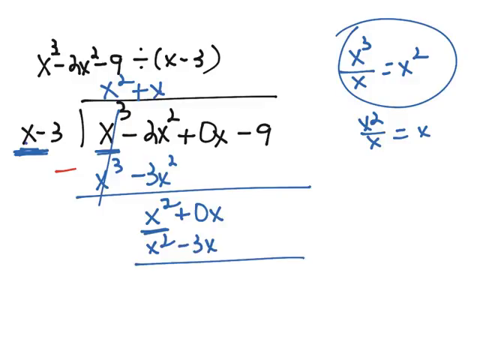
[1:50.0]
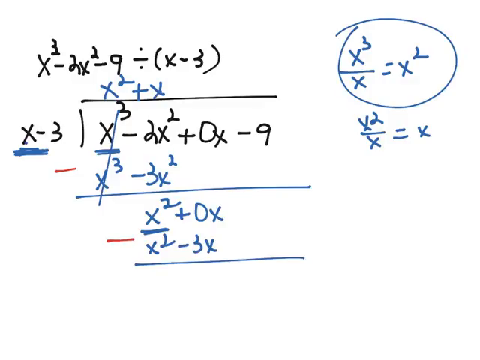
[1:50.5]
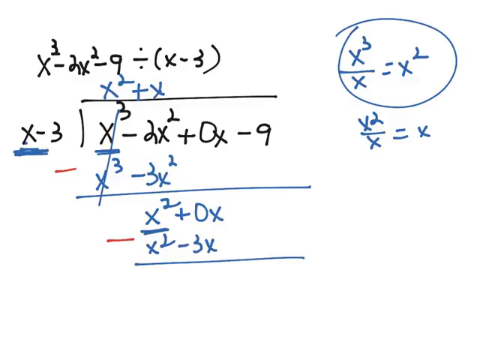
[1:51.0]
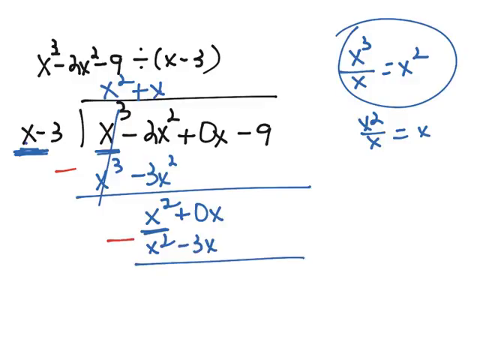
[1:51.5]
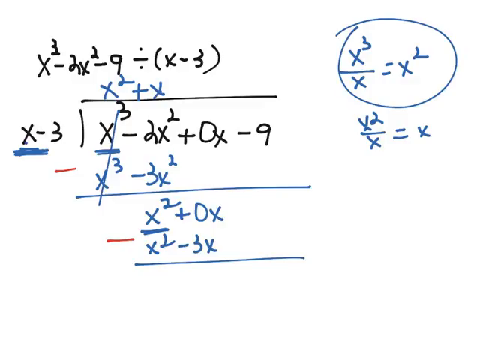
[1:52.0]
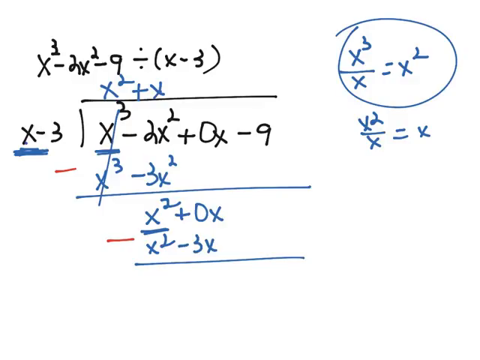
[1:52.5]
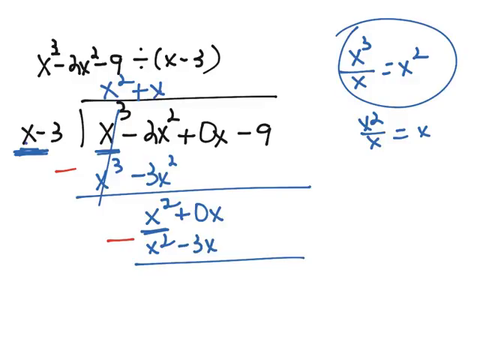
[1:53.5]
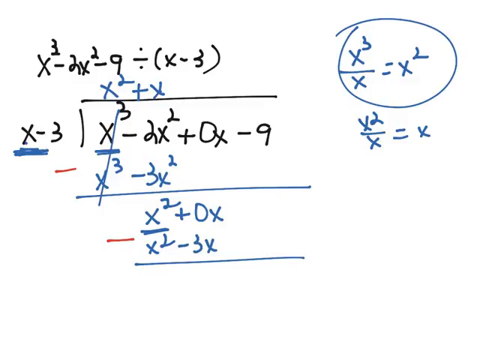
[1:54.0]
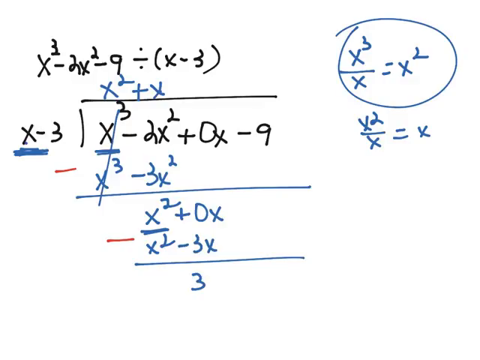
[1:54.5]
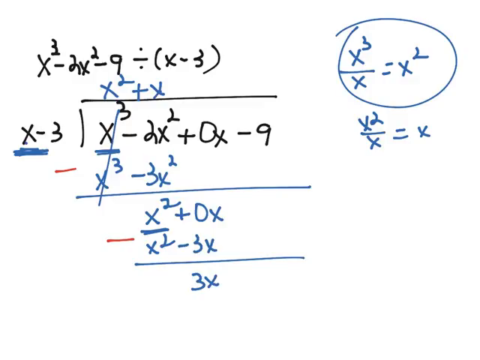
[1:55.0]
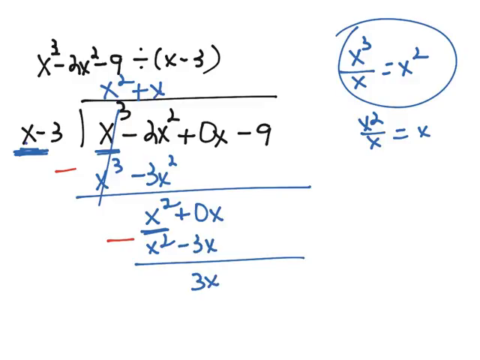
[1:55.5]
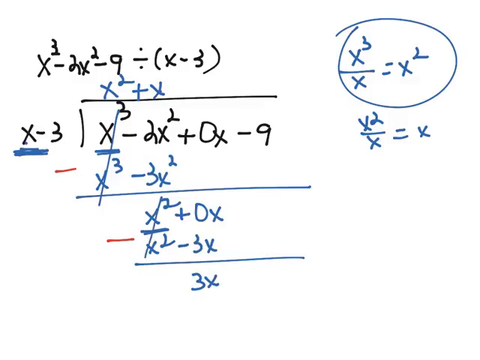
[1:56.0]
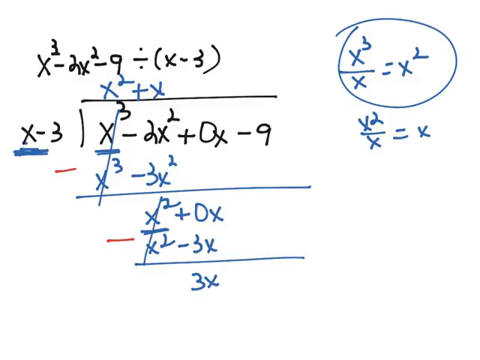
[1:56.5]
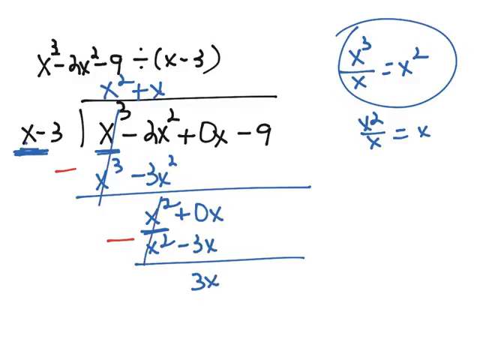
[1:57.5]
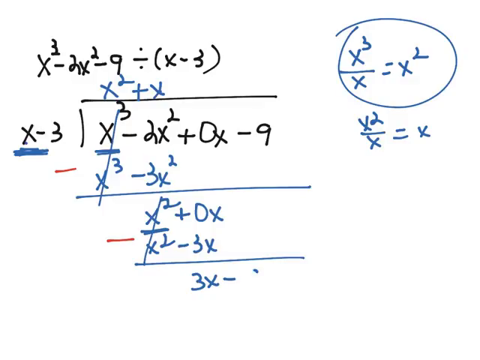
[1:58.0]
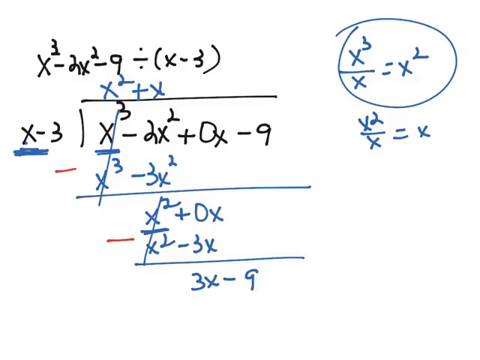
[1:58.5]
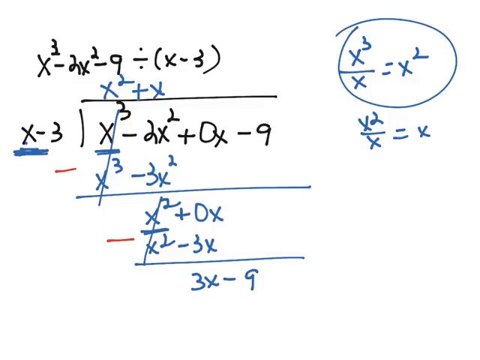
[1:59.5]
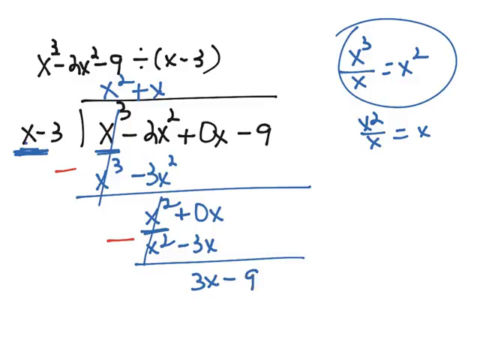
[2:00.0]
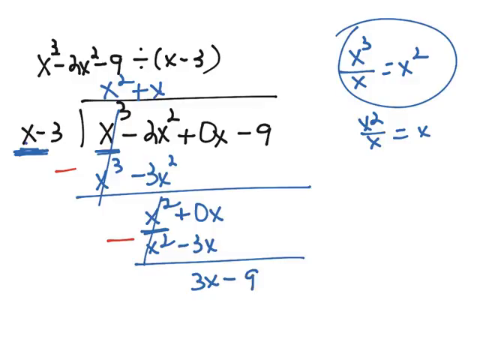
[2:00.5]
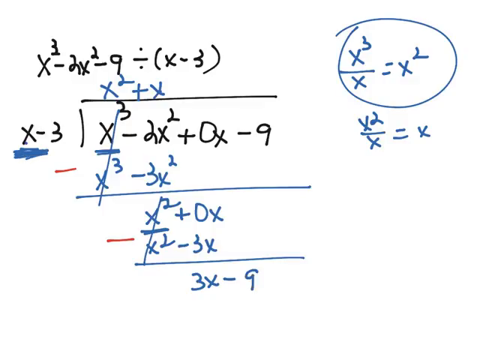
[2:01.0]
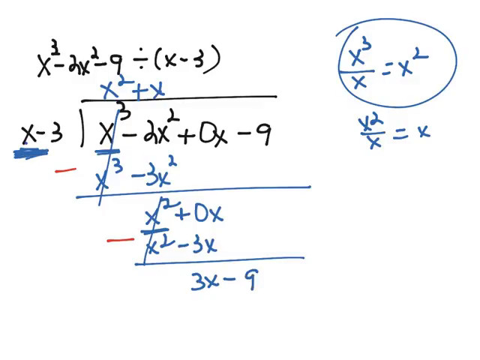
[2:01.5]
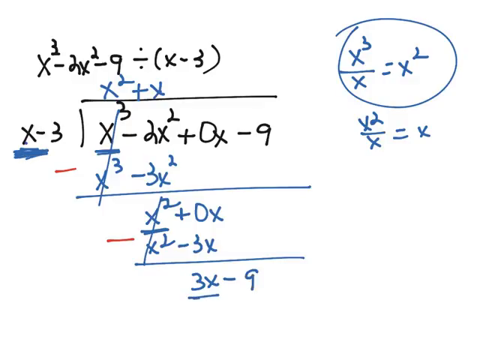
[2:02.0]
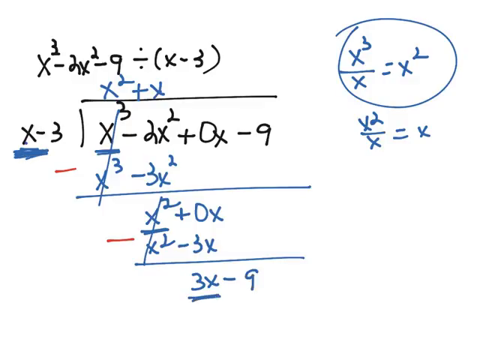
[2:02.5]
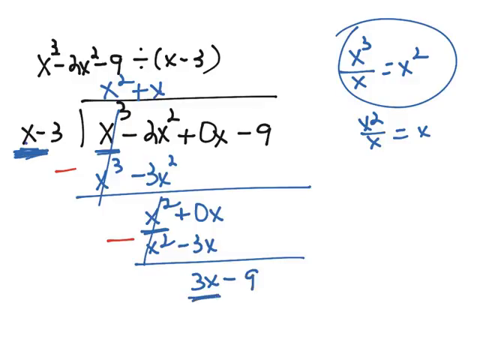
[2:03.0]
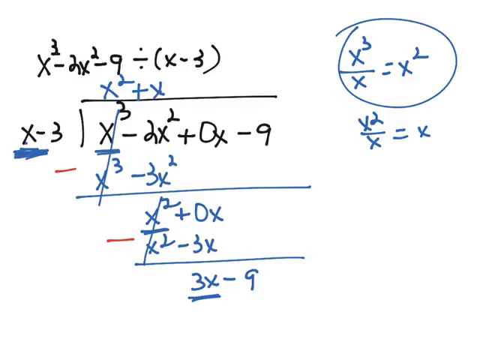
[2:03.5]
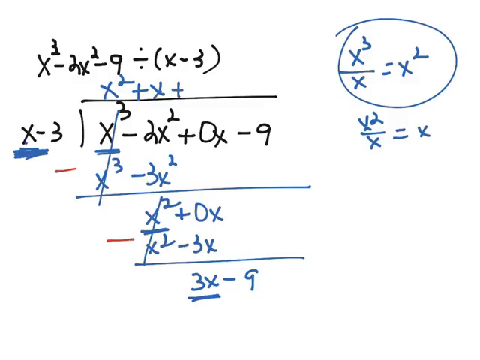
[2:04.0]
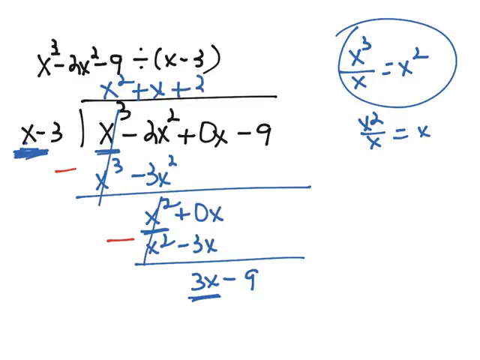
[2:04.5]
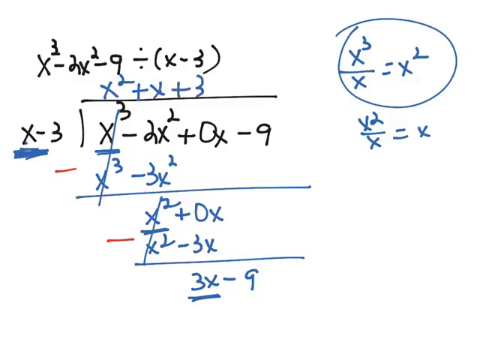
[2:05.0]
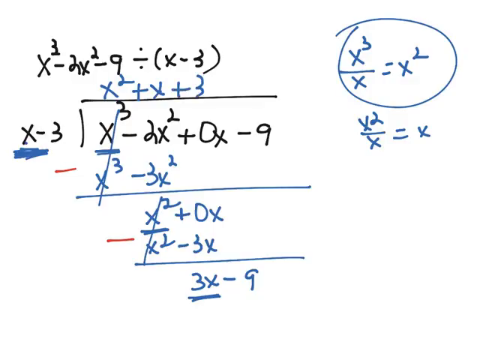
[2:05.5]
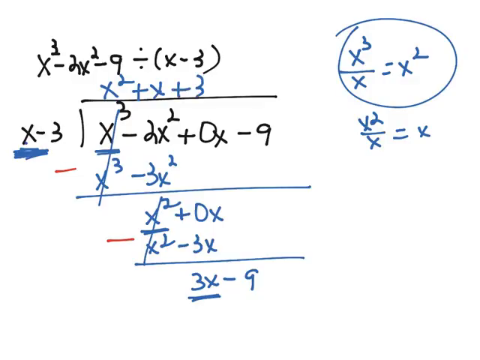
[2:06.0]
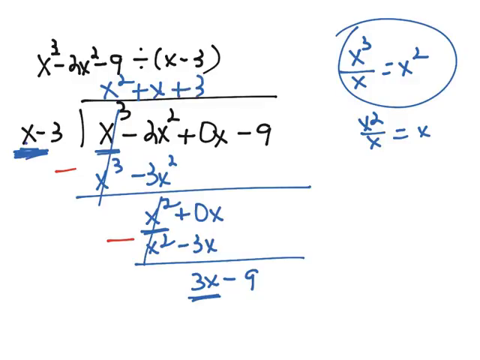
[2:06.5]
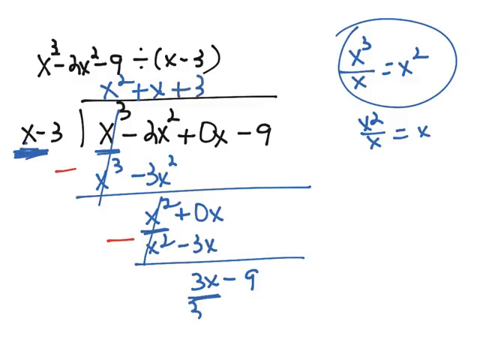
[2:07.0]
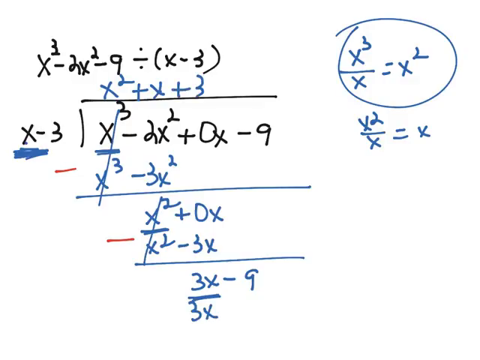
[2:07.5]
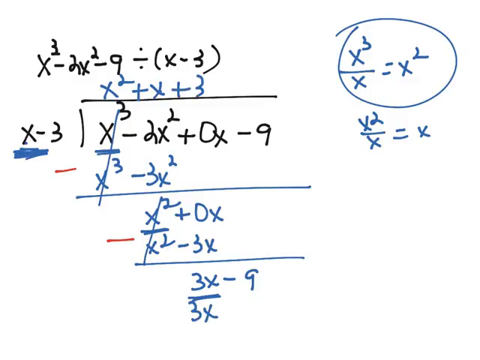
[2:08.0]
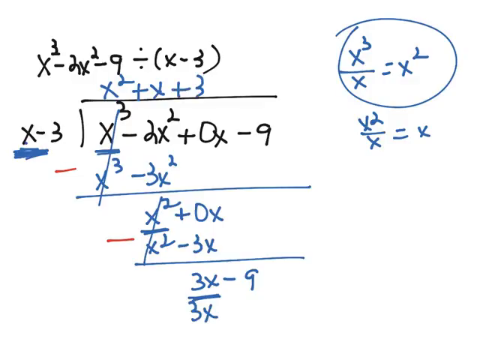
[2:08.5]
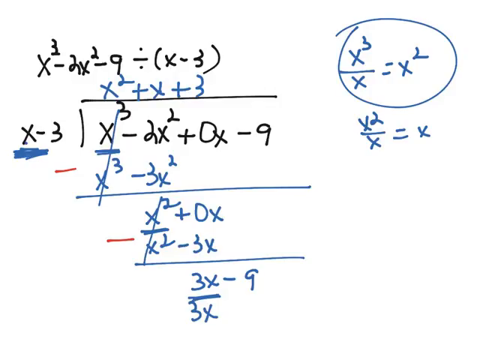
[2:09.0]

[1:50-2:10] The math equation being worked on, x³ − 2x² − 9 divided by (x − 3), remains, with x³ − 2x² + 0x − 9 being divided by x − 3. On top of the division, x² + x has been written so far. Then x² − 3x is shown being divided by 3x − 9. At the top of the division, x² + x + 3 is now written in blue. On the right of the screen, x³ ÷ x = x² is still there, all written in blue and circled in blue, and below the circle, x² ÷ x = x is also written in blue.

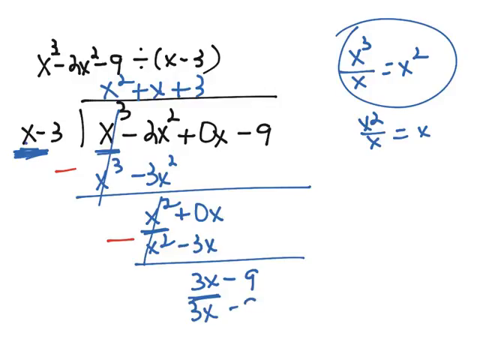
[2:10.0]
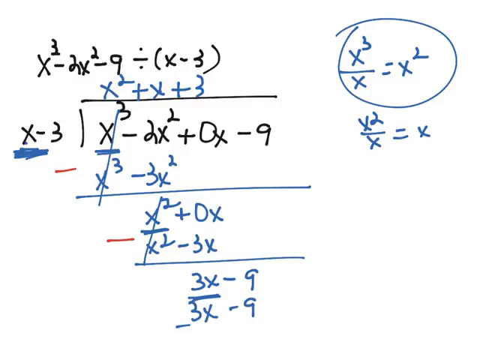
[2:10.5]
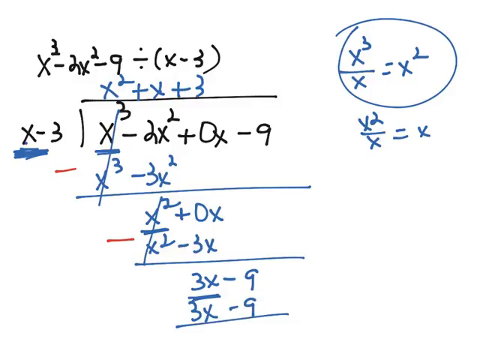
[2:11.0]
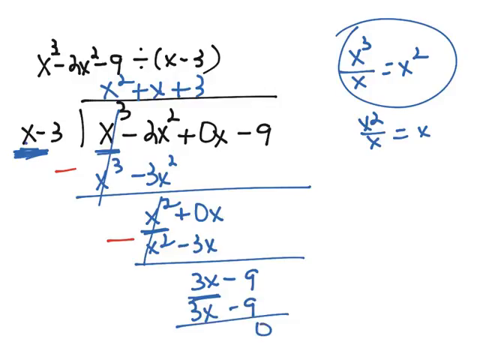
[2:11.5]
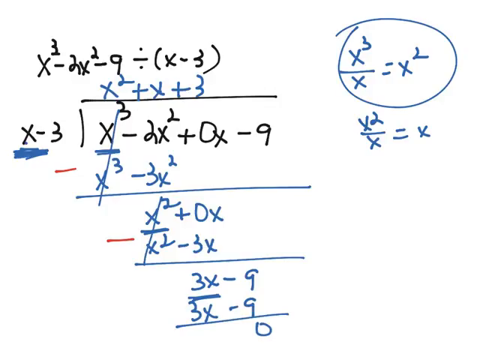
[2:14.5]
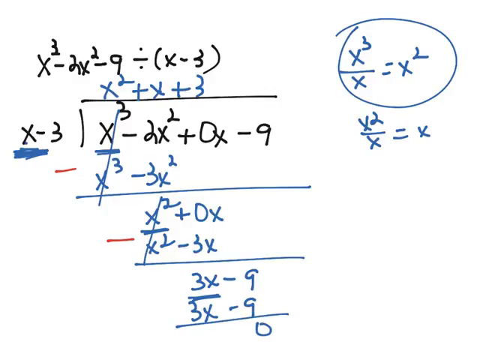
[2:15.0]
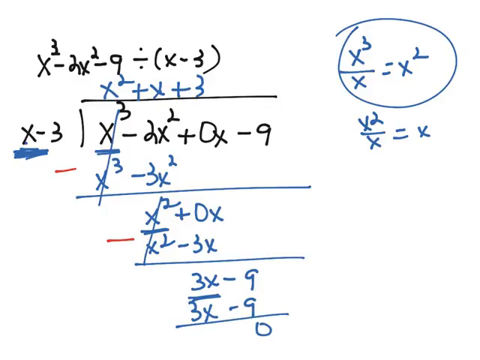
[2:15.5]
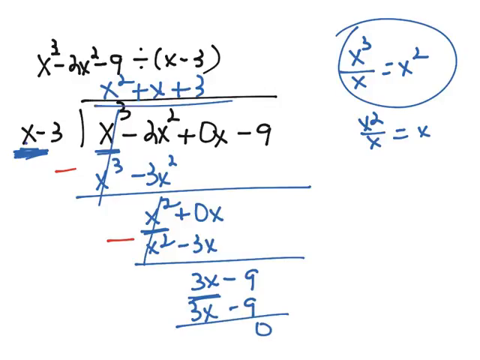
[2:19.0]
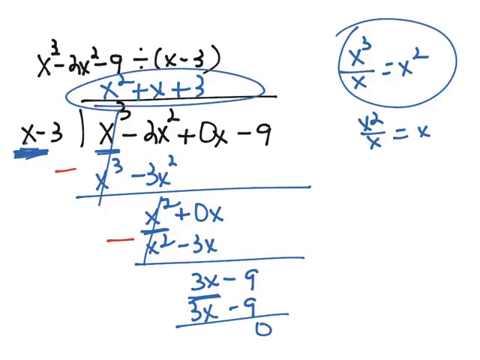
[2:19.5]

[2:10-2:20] The math equation continues to be worked on: x³ − 2x² + 0x − 9 is being divided by x − 3, with x² + x + 3 written at the top of the division. Then 3x − 9 is divided by 3x − 9, which equals 0, so the result remains x² + x + 3. The blue x³ ÷ x = x² is circled in blue, and below the circle is x² ÷ x = x, also written in blue.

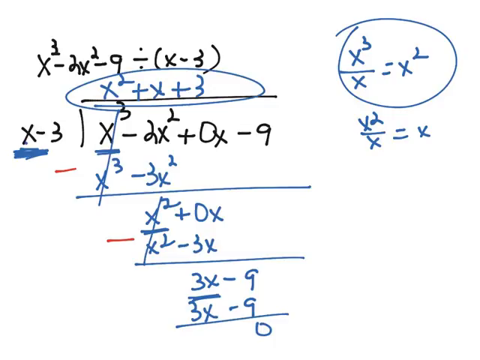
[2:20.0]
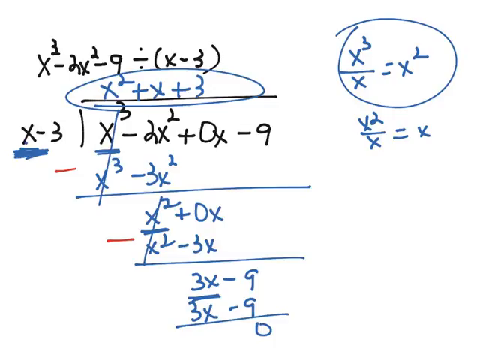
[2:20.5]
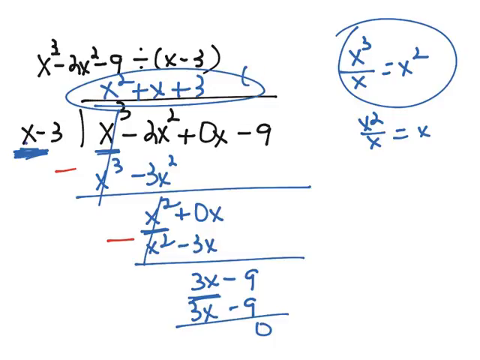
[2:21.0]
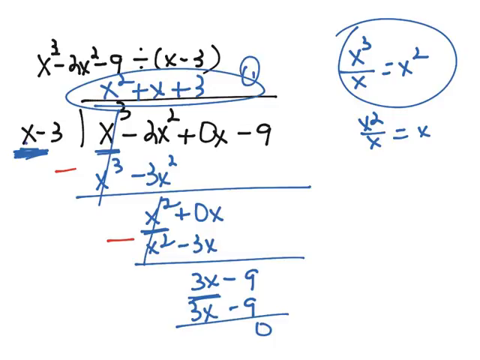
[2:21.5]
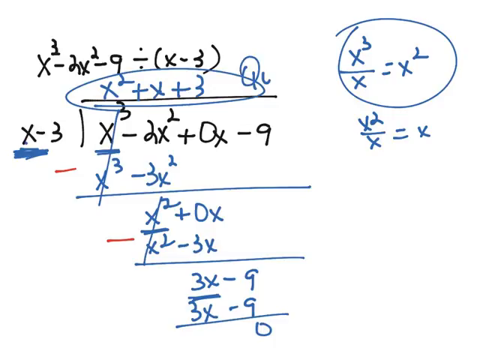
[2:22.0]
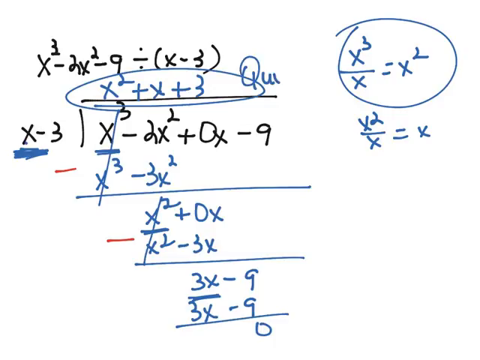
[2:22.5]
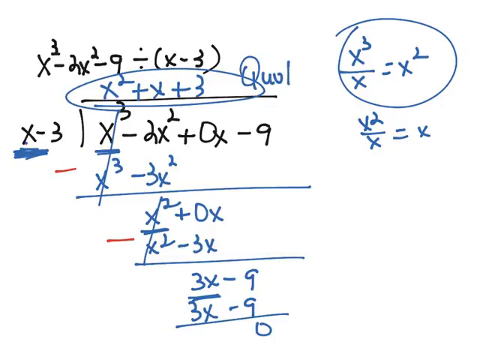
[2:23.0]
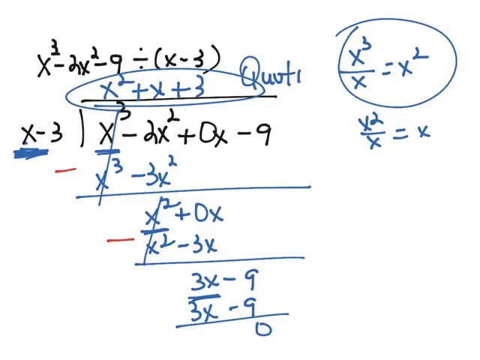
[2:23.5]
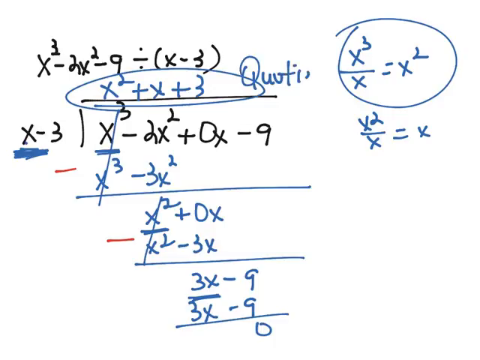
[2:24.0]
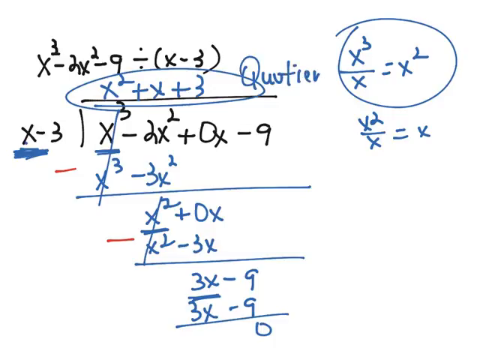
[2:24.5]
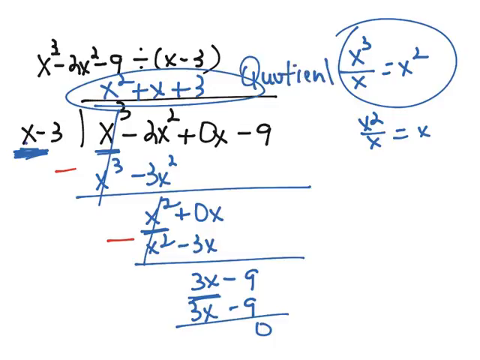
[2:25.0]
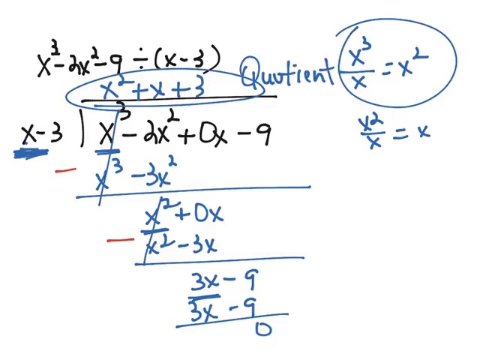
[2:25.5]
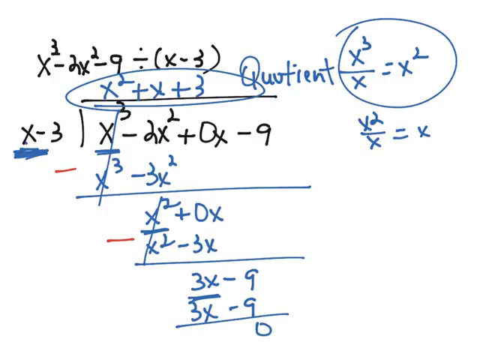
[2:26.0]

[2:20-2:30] The math equation x³ − 2x² + 0x − 9 divided by x − 3 is shown, with x² + x + 3 written in blue at the top of the division. The word "quotient" is now written in blue to the left of x³ ÷ x = x², which is circled in blue. The original math equation, x³ − 2x² − 9 divided by (x − 3), is now nearly solved.